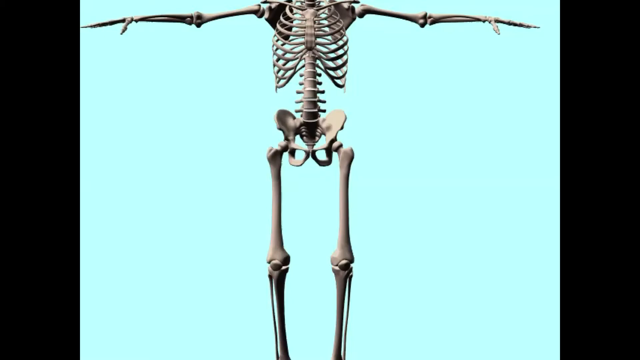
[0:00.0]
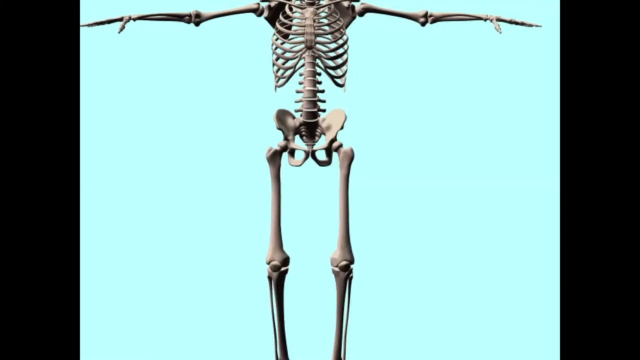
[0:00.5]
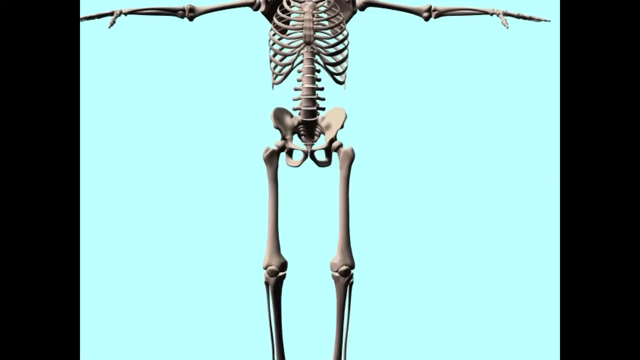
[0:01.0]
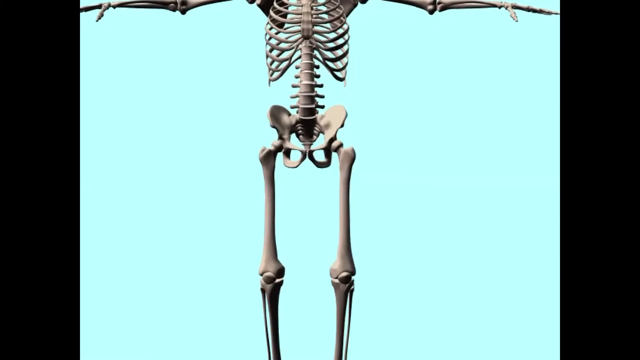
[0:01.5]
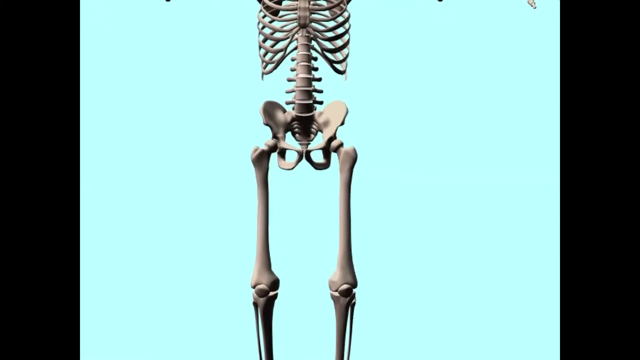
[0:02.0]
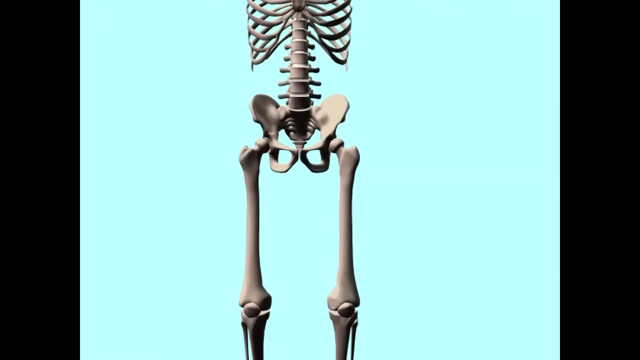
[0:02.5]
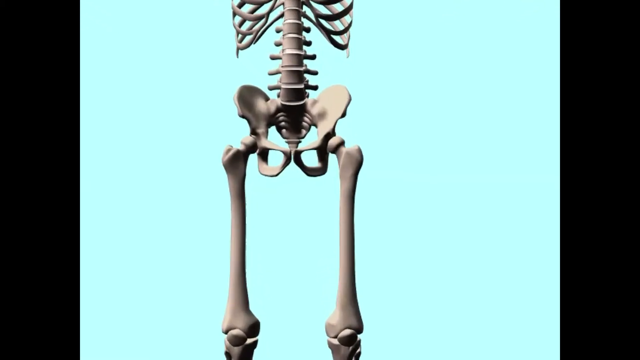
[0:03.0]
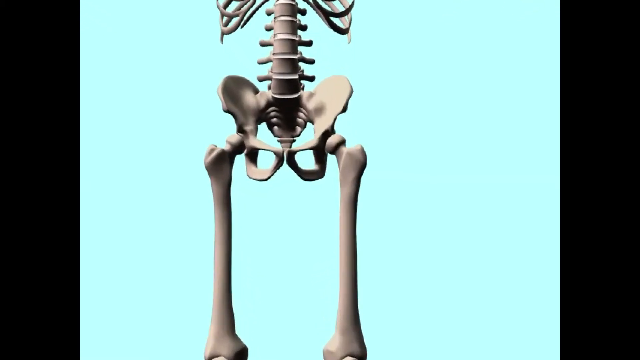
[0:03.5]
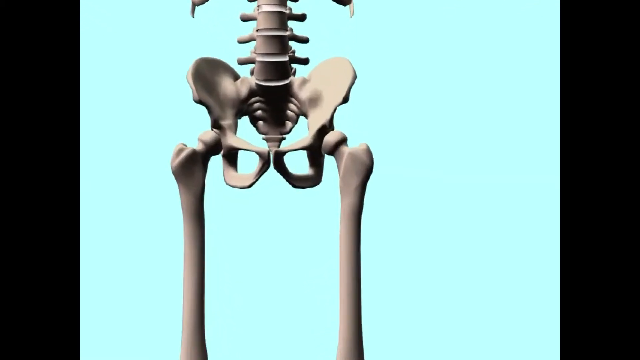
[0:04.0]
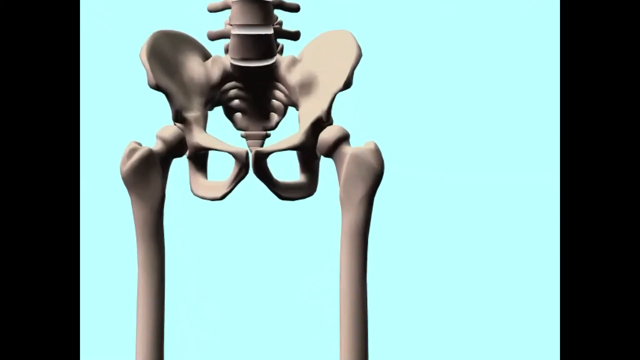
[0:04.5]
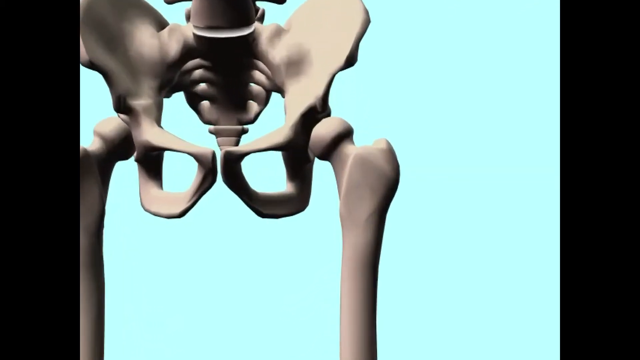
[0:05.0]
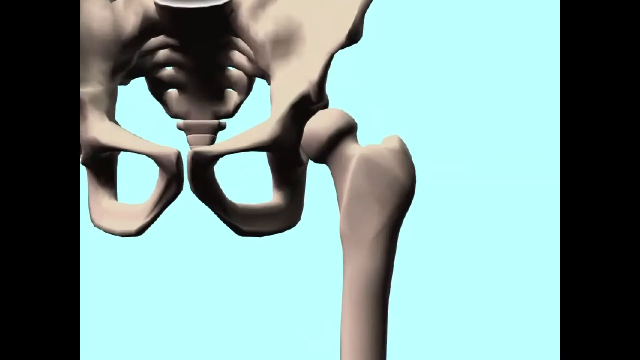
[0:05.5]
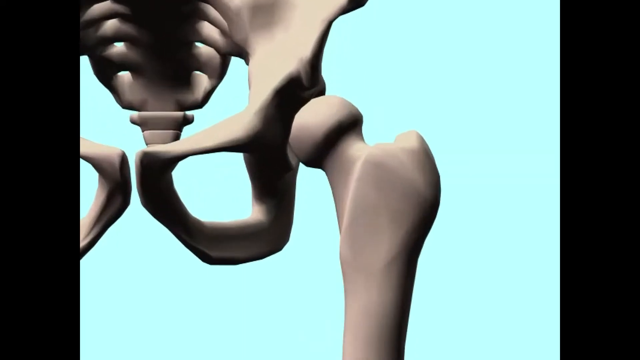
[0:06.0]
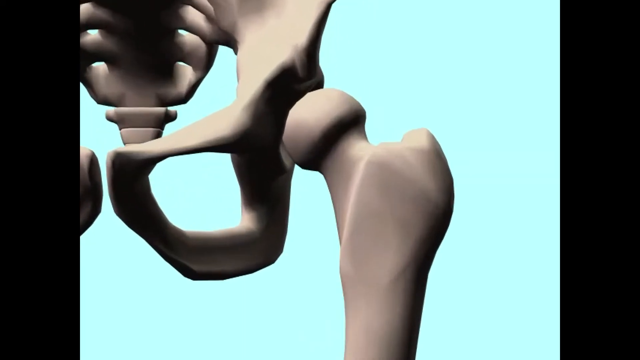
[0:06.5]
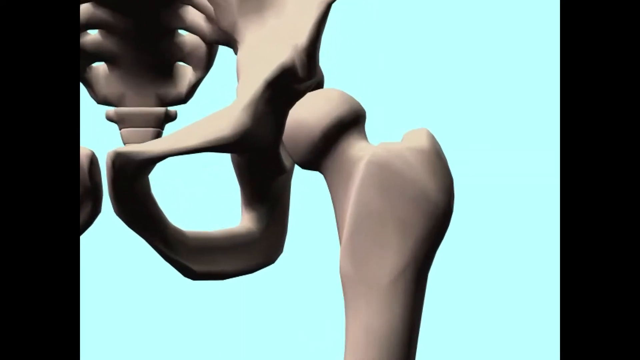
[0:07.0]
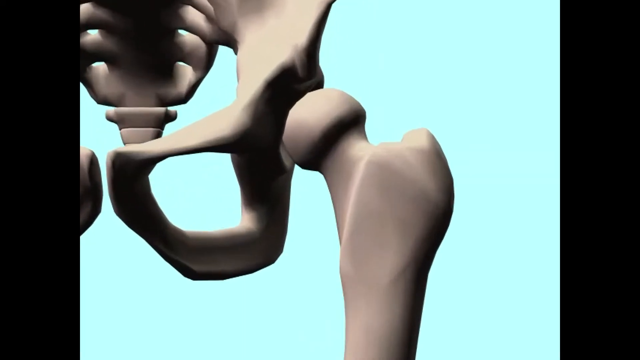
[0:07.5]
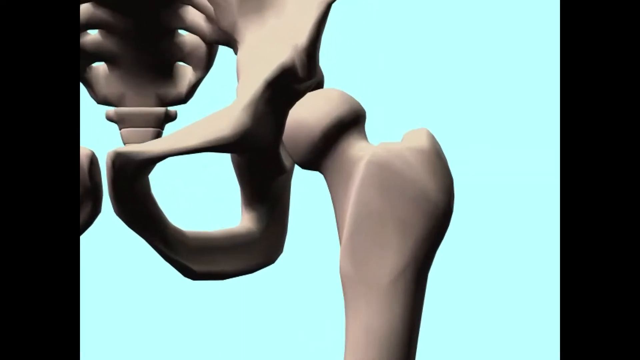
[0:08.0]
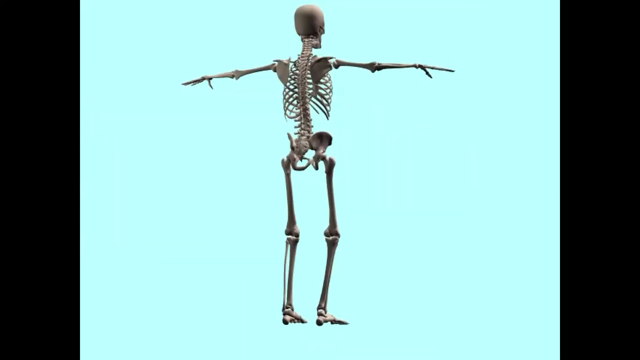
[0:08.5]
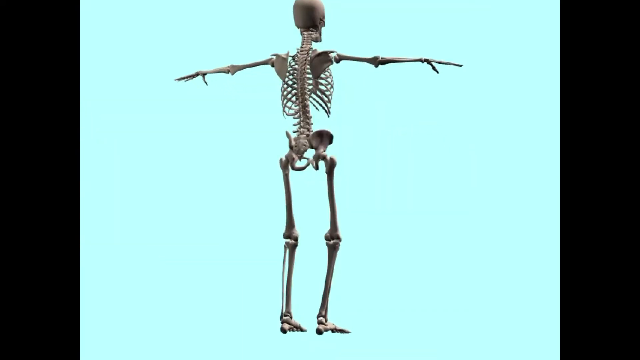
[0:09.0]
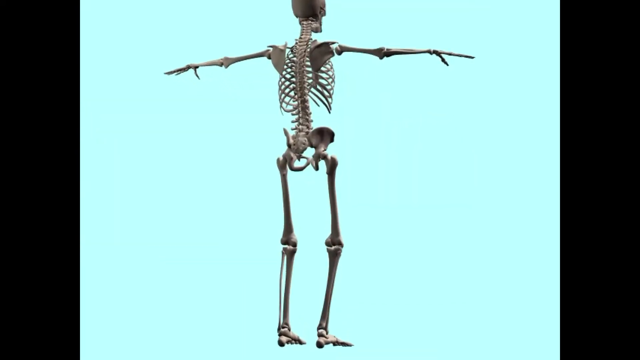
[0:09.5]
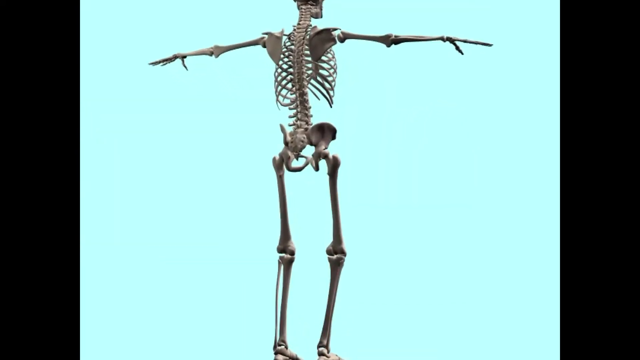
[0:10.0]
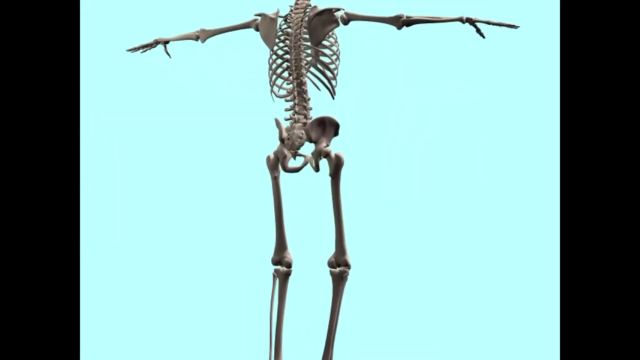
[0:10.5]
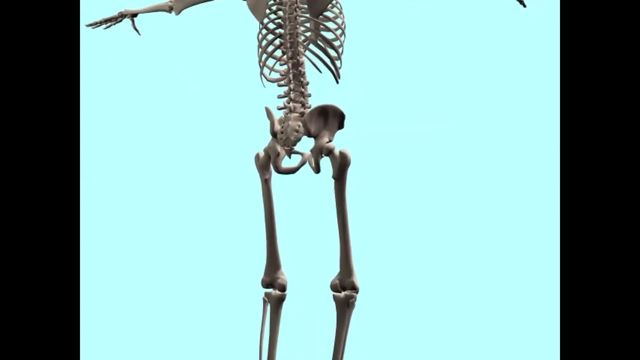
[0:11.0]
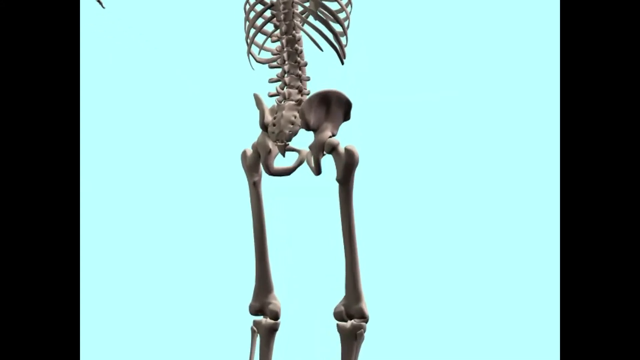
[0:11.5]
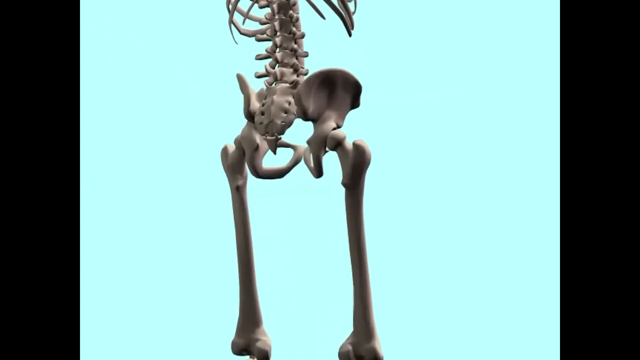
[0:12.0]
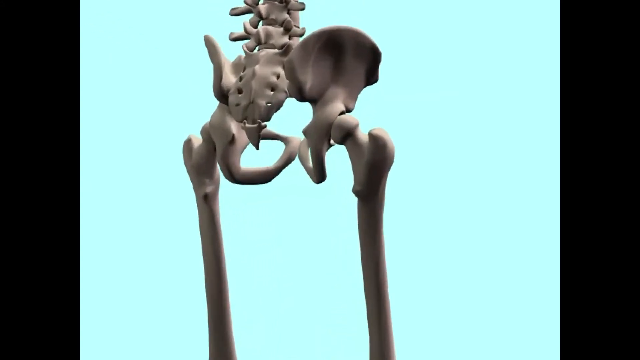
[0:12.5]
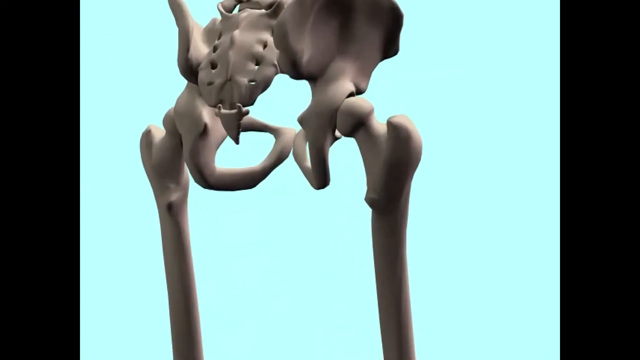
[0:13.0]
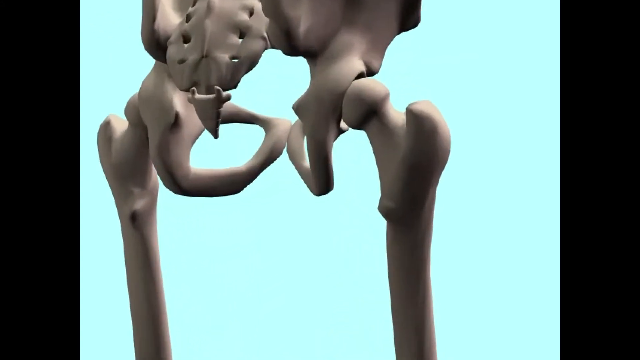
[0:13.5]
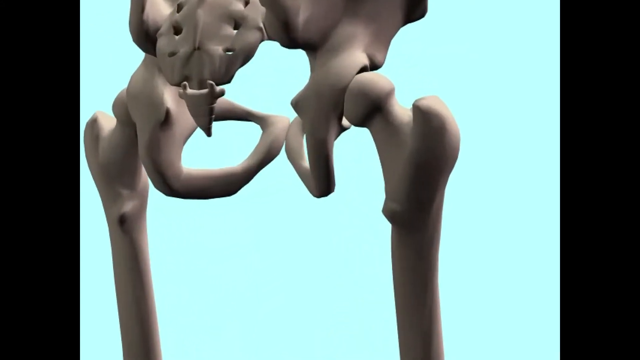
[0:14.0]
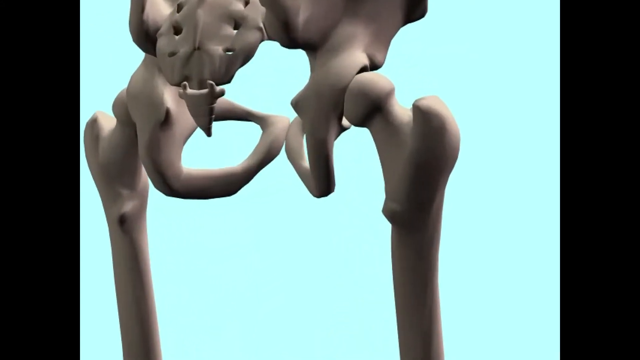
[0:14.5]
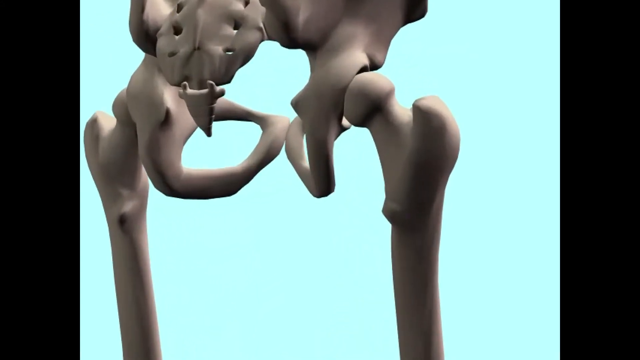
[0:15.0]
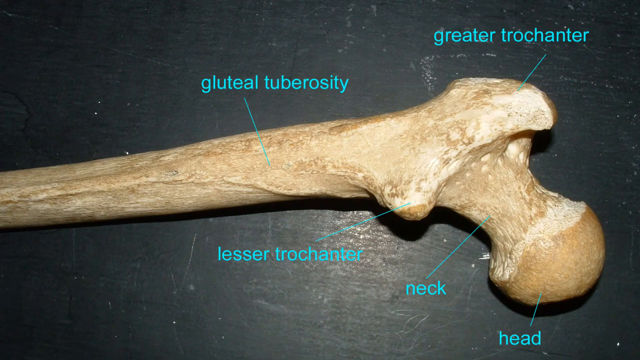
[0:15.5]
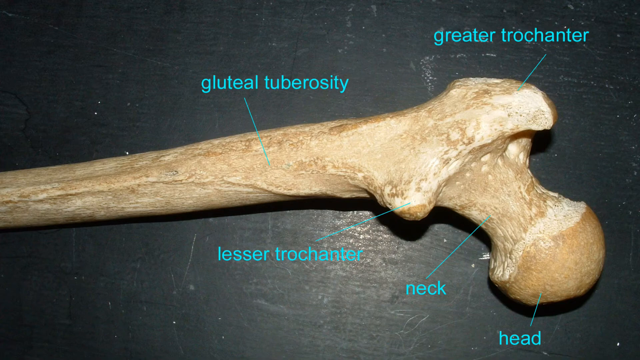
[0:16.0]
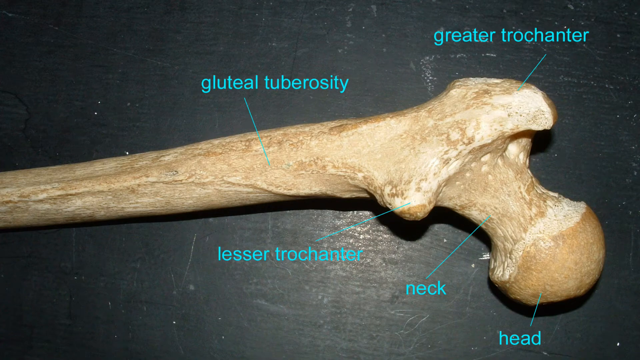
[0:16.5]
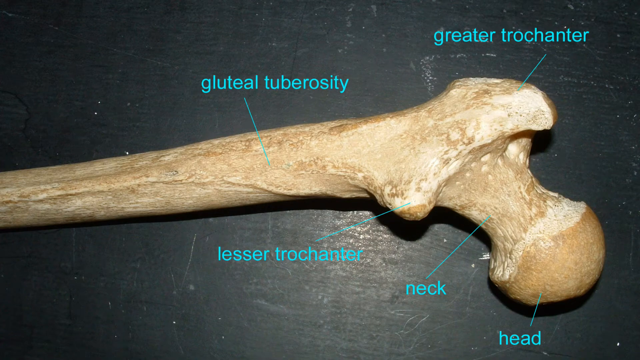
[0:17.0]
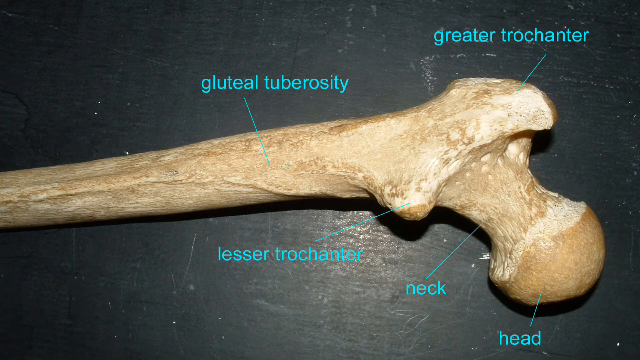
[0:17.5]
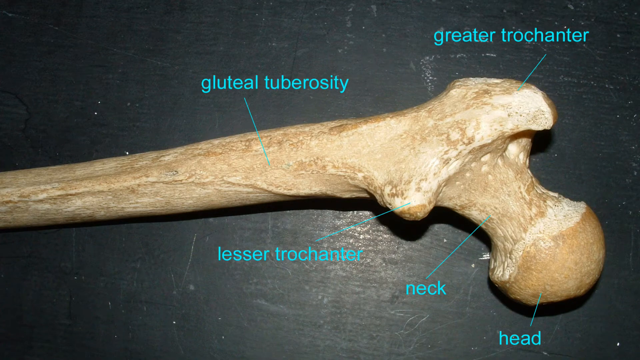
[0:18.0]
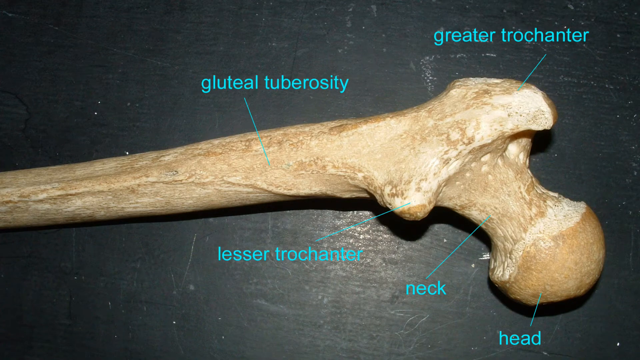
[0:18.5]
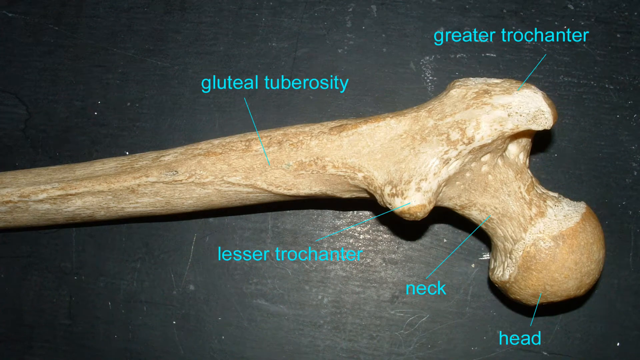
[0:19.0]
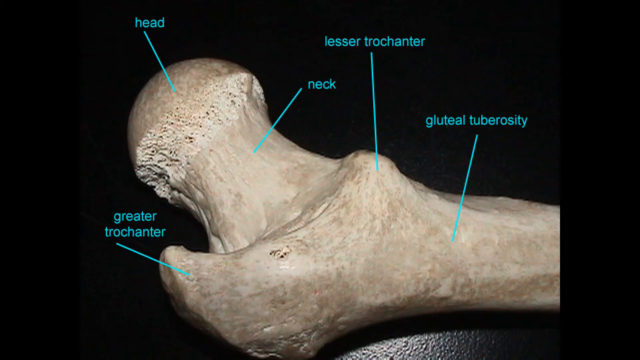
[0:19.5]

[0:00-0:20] Black panels run vertically down both sides of the screen, from the top left corner to the bottom left corner and from the top right corner to the bottom right corner. In the centre is a blue background with a skeleton that stands tall, its arms reaching out to the left and right sides of the screen. A zoomed-in image of the pelvic area follows, then the image zooms out to show the back of the skeleton, still with its arms out to the sides. The view zooms in to the pelvic bone, and then an image shows a bone on a desk, facing horizontally on the screen. The desk is black in the background, and labels describe various areas of the bone.